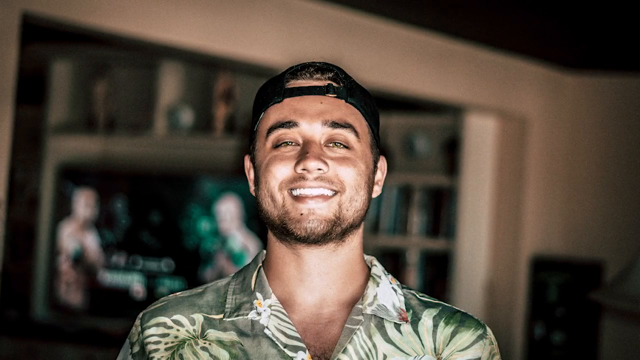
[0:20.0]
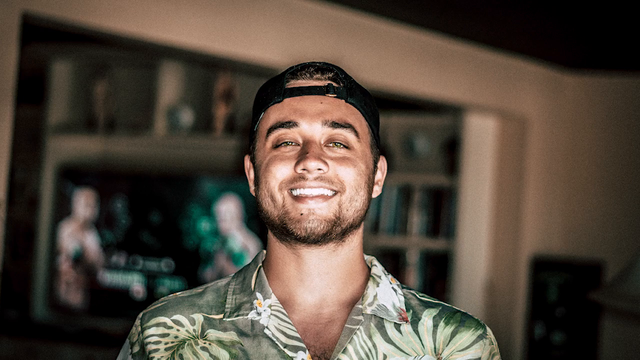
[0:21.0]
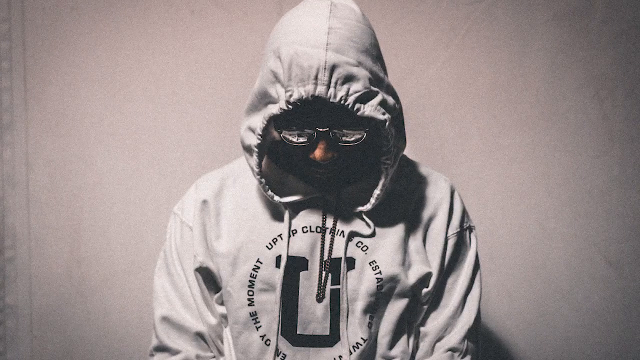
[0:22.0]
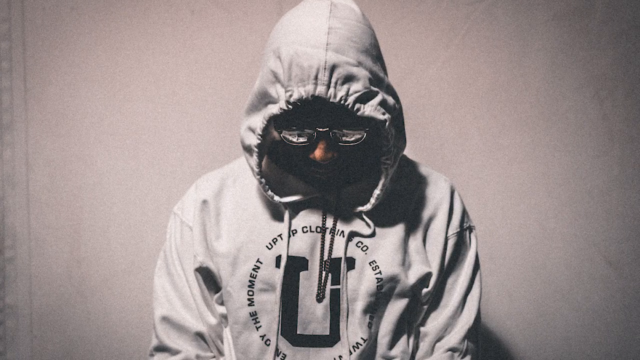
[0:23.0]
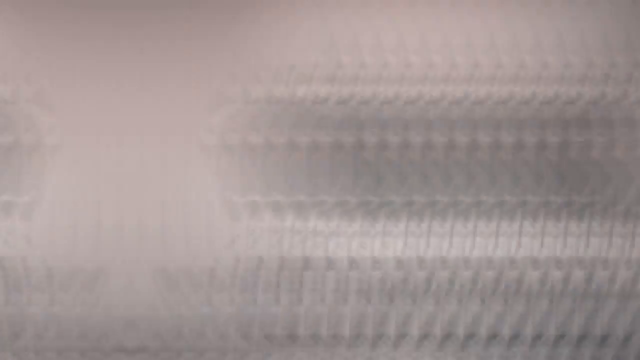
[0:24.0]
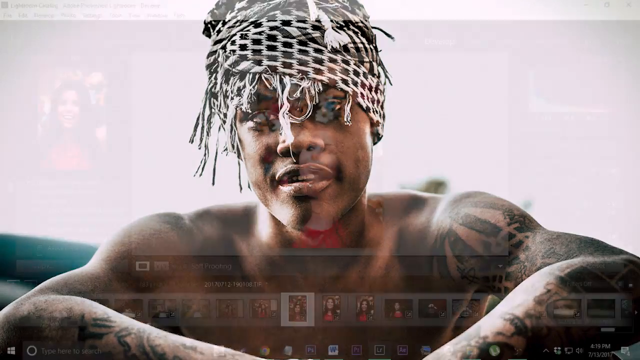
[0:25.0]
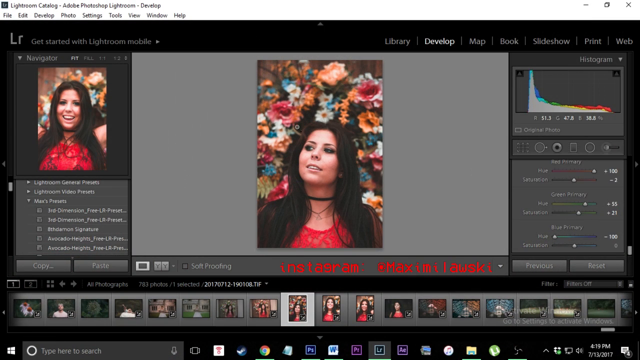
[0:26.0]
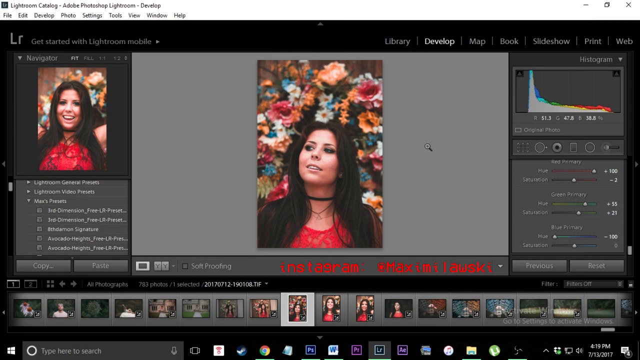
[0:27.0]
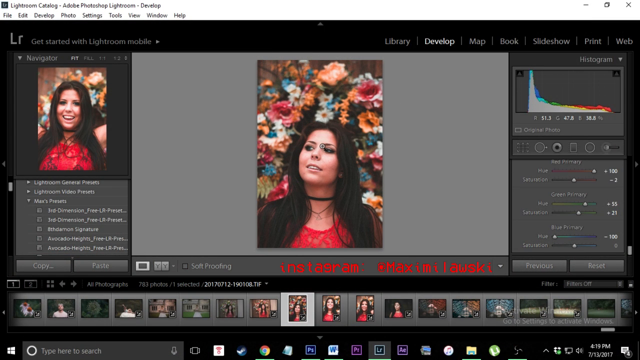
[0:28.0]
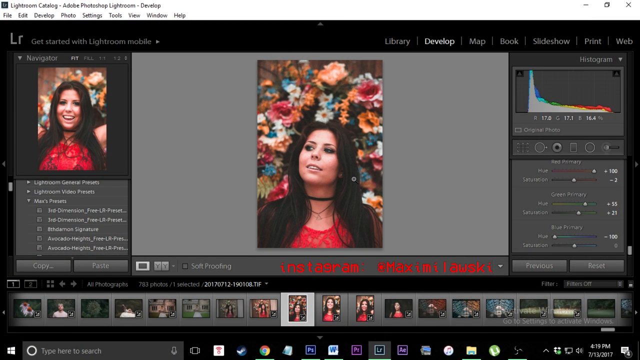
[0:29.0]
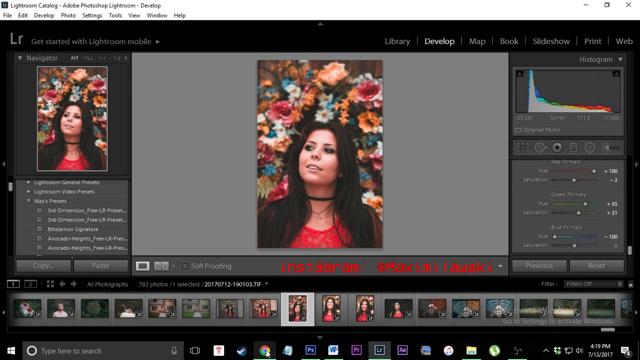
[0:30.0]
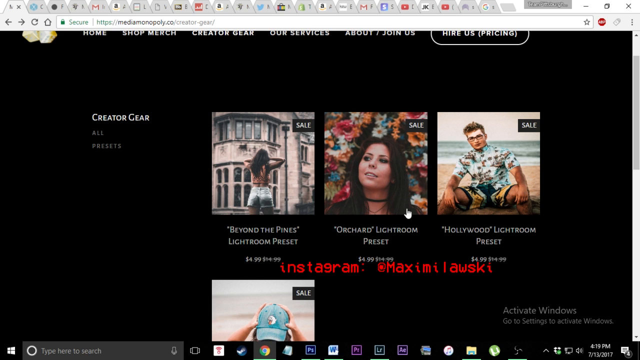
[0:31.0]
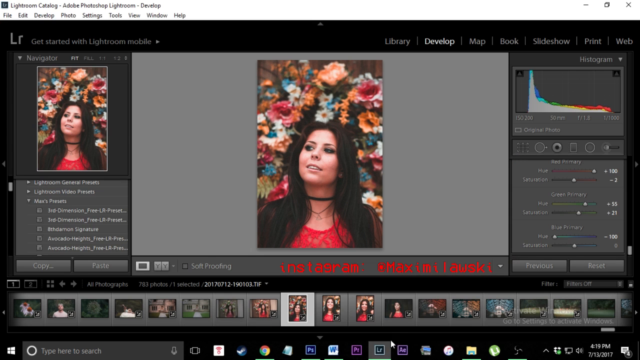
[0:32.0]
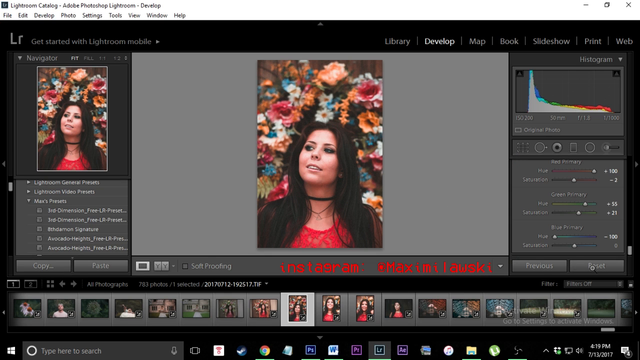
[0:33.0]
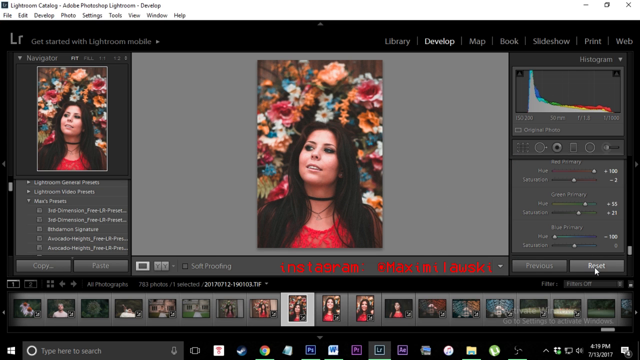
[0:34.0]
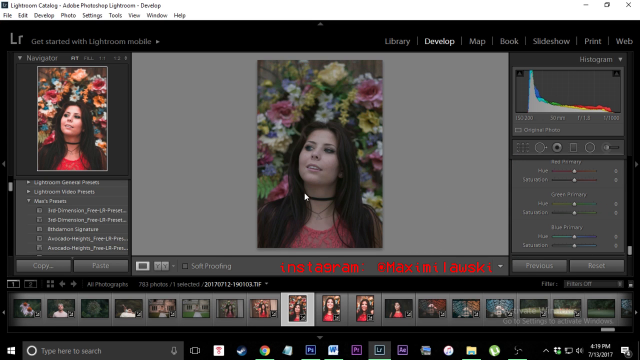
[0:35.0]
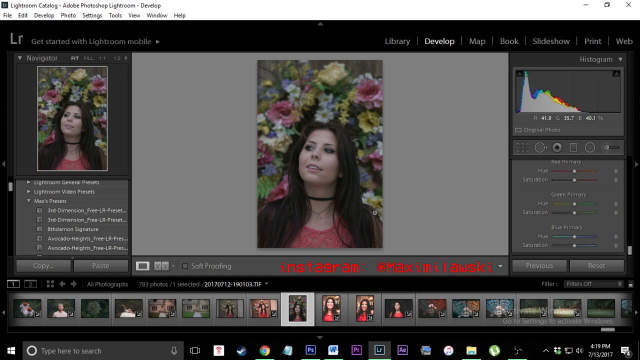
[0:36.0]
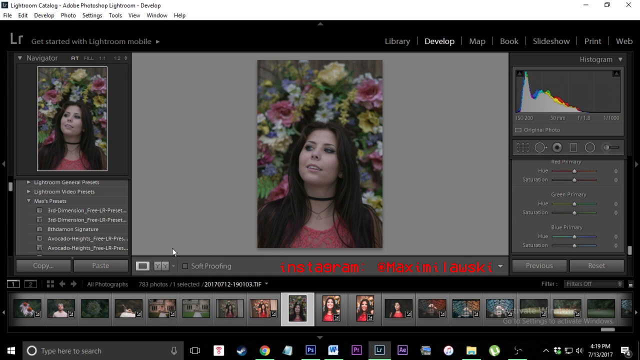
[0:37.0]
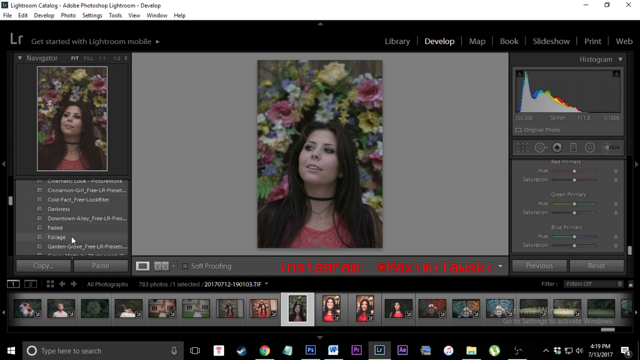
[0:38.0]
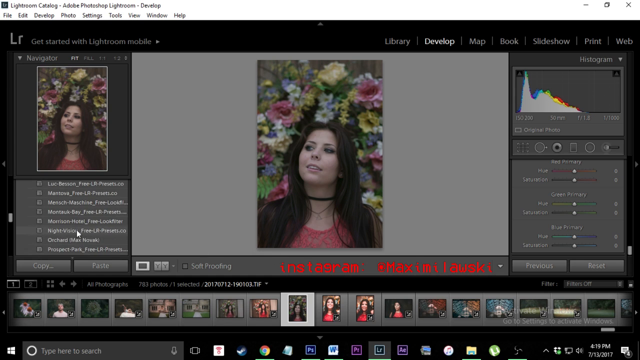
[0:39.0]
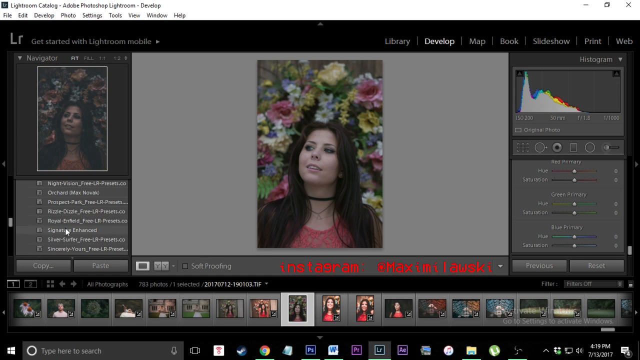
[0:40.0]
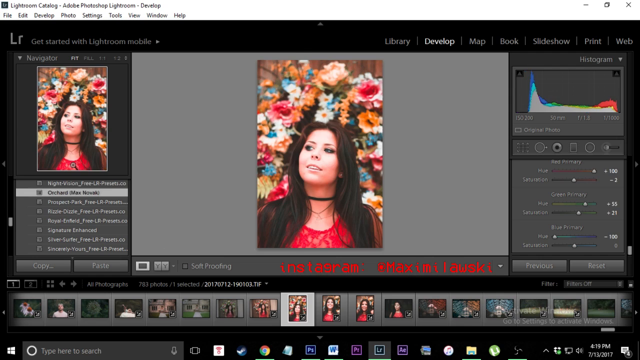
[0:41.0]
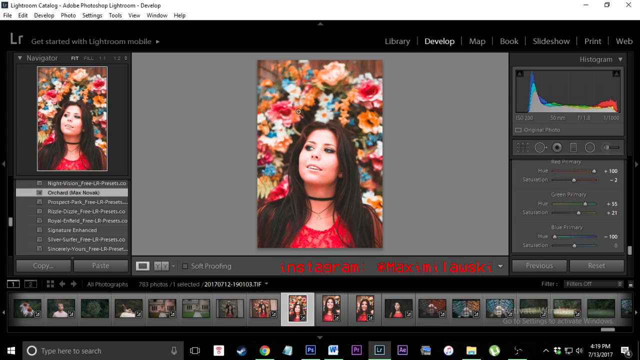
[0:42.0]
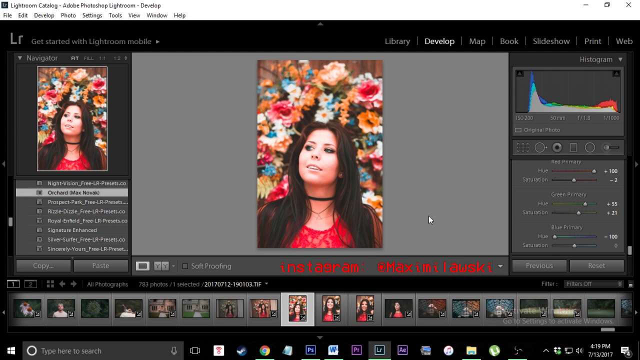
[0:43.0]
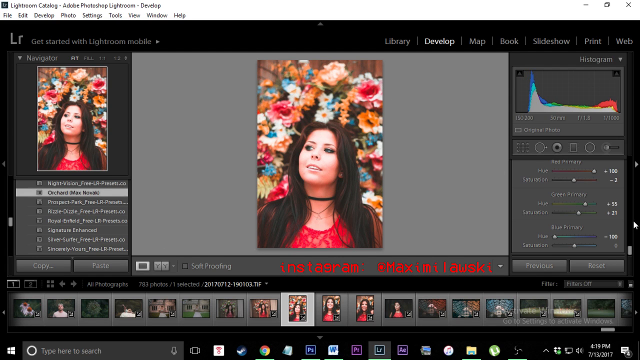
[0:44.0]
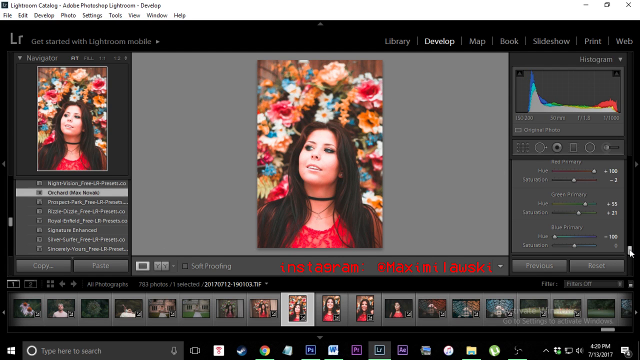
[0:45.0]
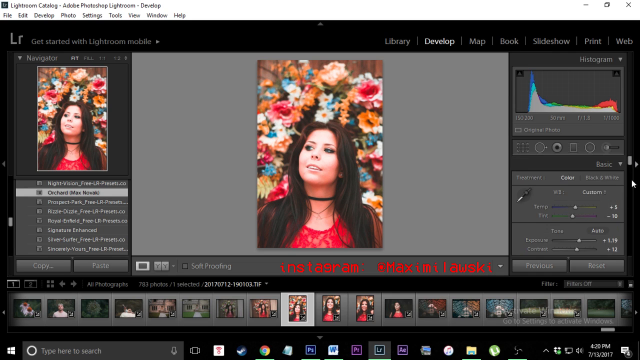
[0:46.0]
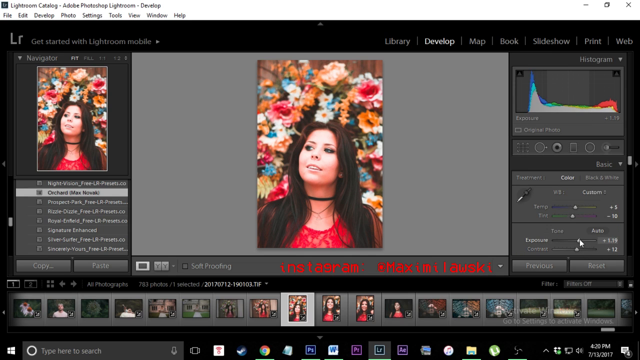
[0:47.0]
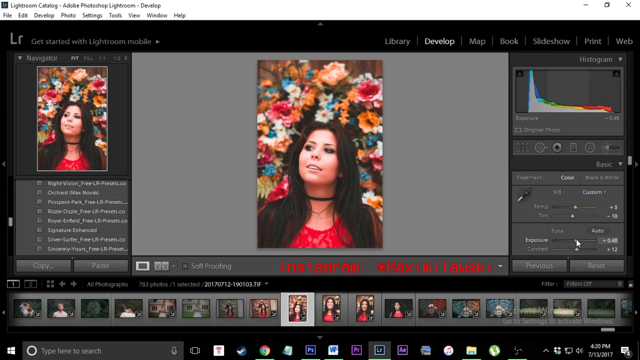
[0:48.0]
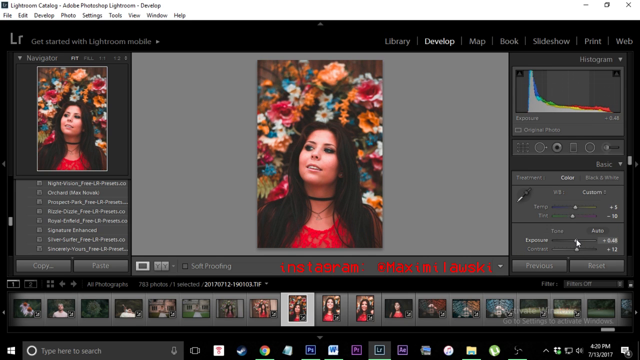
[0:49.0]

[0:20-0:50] Photos of women appear one after another, with a transition effect changing each photo into the next. Three men wear different clothing and are in different locations. A photo of a woman then appears in the middle of what looks like a website, with other options for the photo around it, including "custom movie." Someone clicks on parts of the page, selects a video, and then clicks some buttons; the image's quality changes from bright colors to dull, and it can be turned back to bright color. The app is used to demonstrate editing a photo from its original appearance to another by clicking to make adjustments.